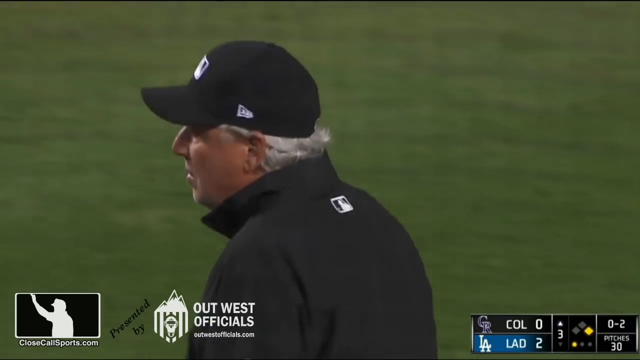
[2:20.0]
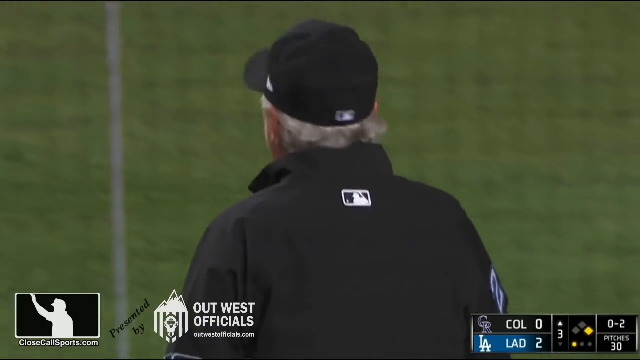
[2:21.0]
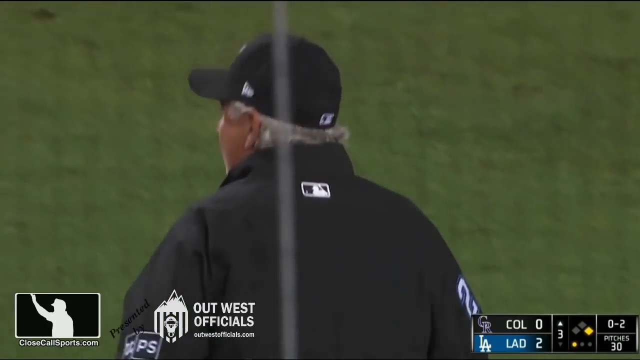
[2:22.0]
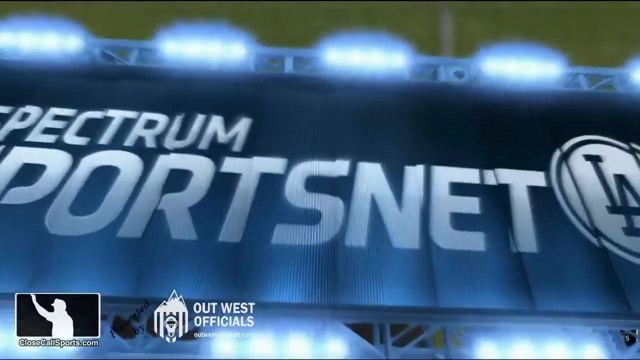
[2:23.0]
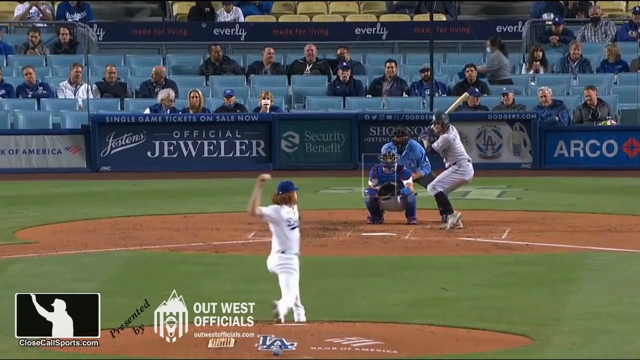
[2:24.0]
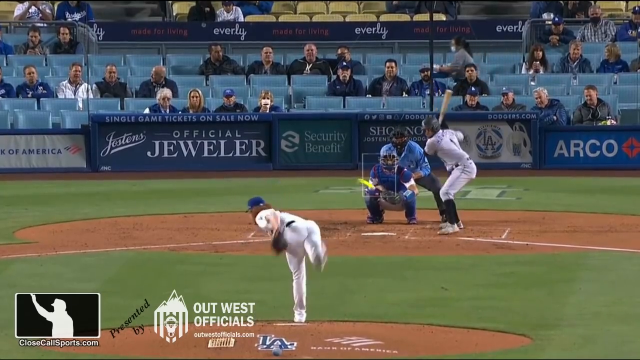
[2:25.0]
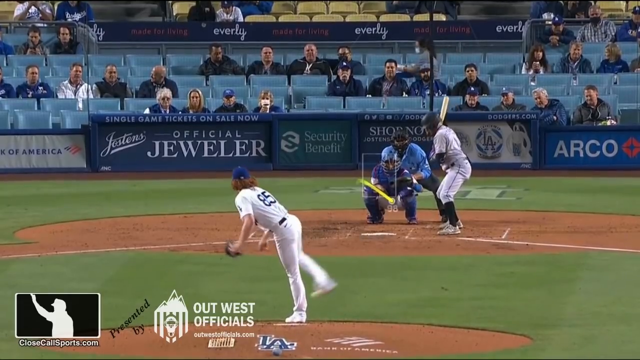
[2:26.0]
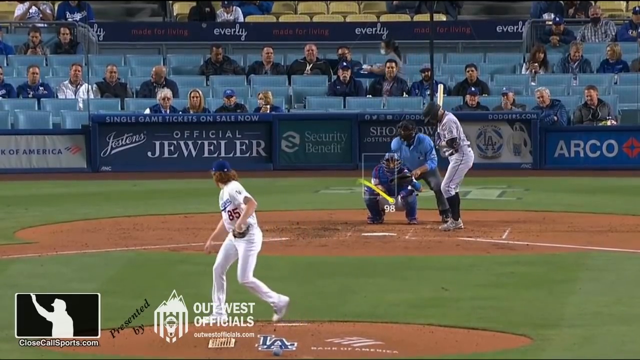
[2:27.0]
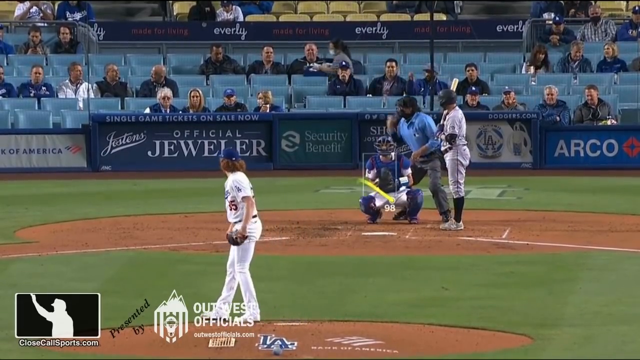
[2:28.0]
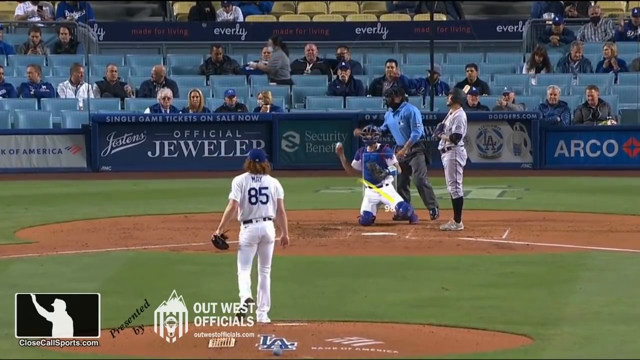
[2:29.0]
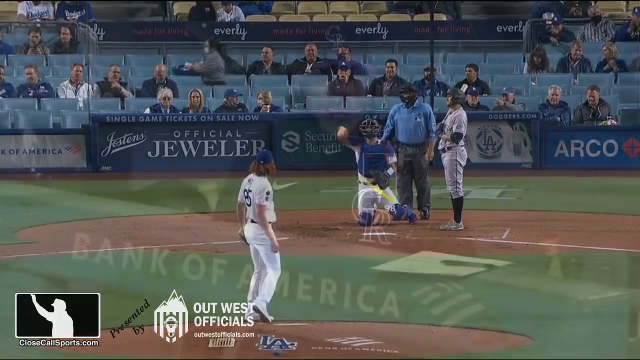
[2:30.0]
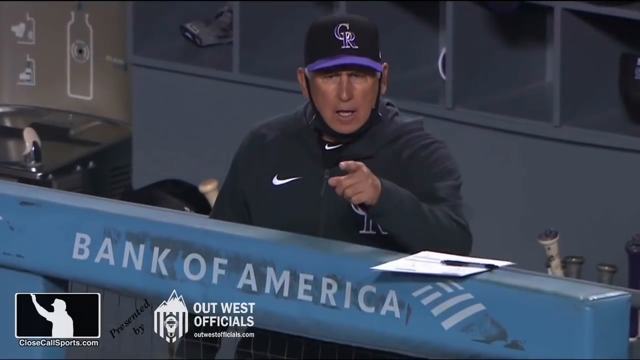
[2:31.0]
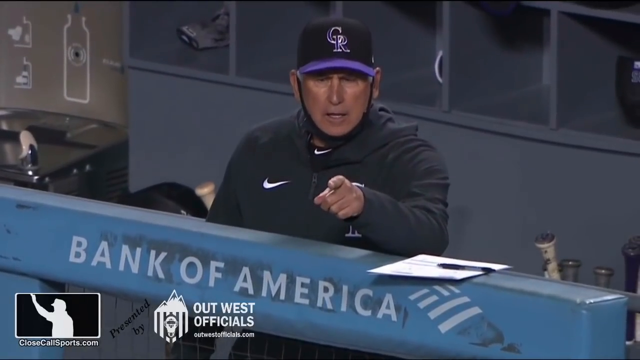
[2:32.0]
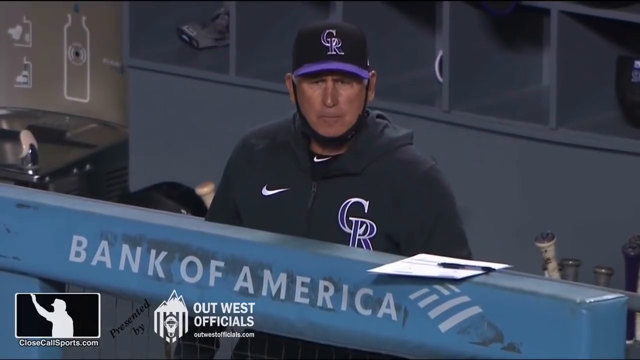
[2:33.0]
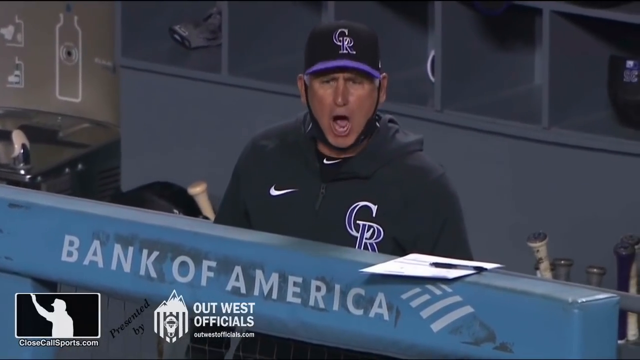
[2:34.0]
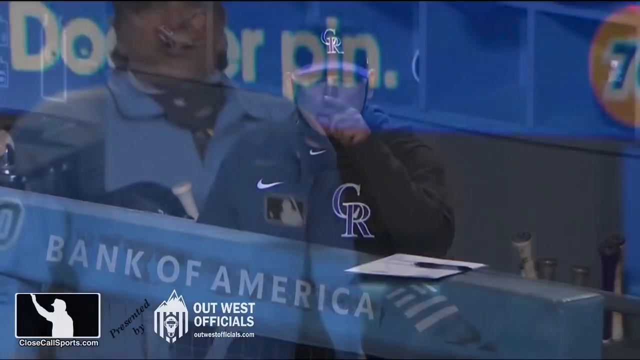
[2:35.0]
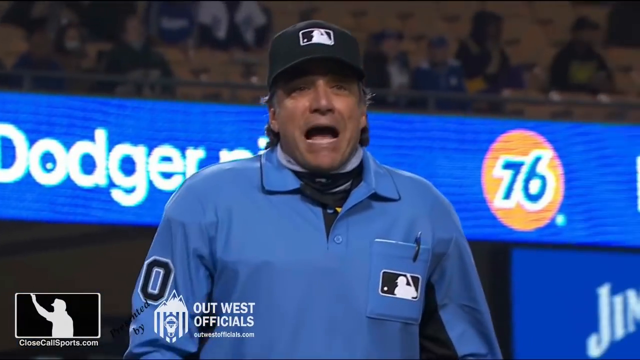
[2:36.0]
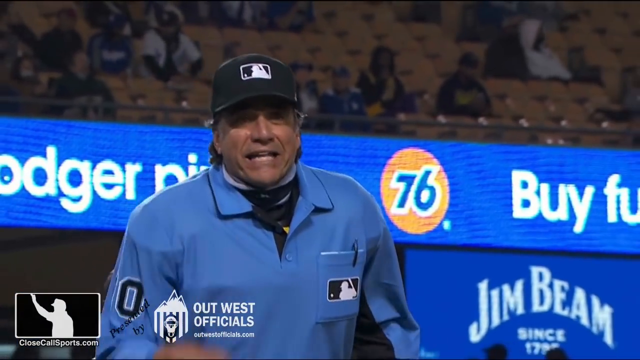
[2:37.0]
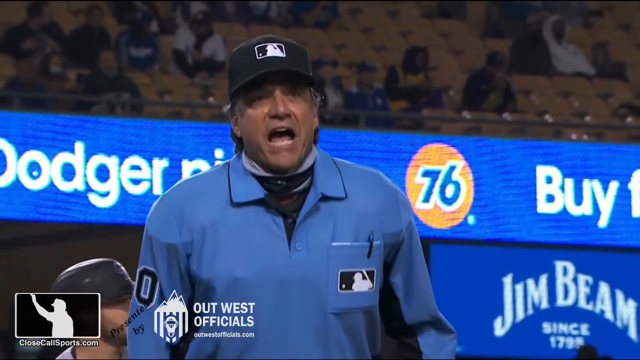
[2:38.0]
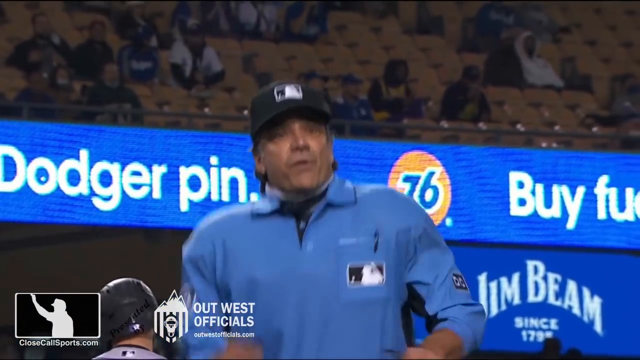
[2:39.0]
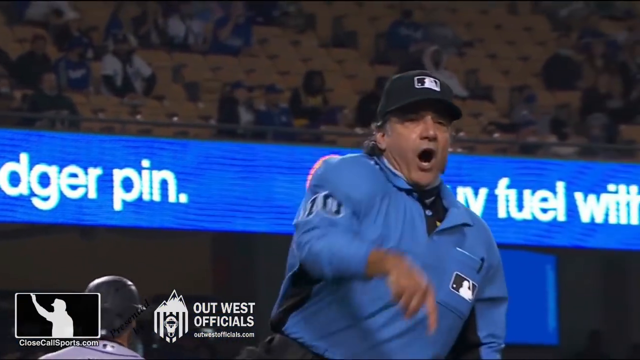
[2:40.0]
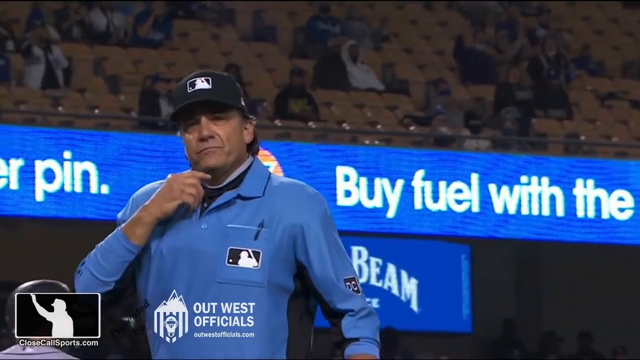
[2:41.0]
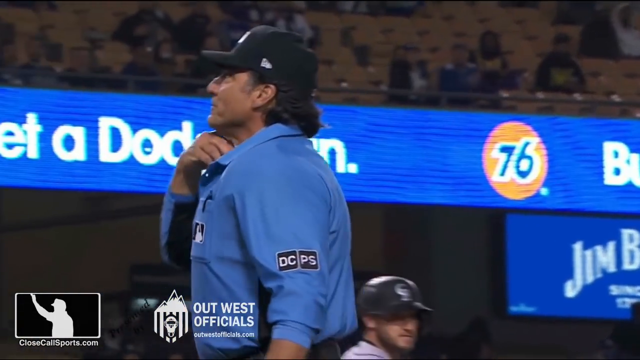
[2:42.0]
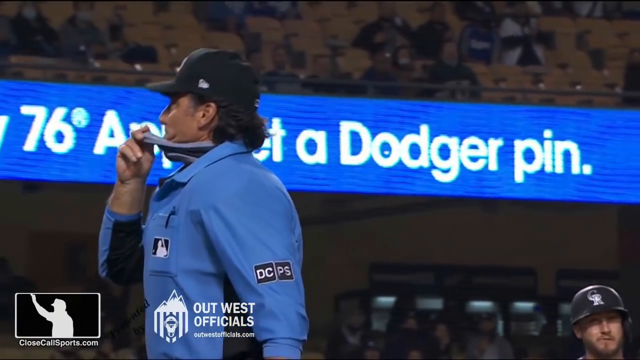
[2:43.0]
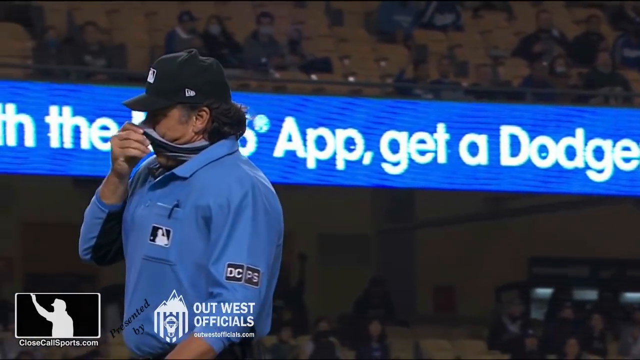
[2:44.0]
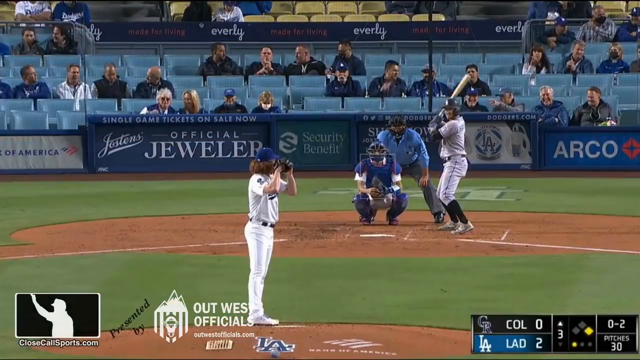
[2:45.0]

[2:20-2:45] The umpire walks back after stopping the game again because the ejected Colorado Rockies manager would not leave the dugout in a timely manner. The umpire has removed his mask and walks over. A replay shows the previous call, several inches low, that was called a strike, and the camera pans over to the Rockies manager, in a Nike outfit, completely losing his cool and shouting explicit words at the umpire in an unfriendly exchange. The replay shows the umpire throwing his arm up and telling the manager to get out of the game, then turning around, putting his mask on, and getting back behind home plate ready to call the next pitch.